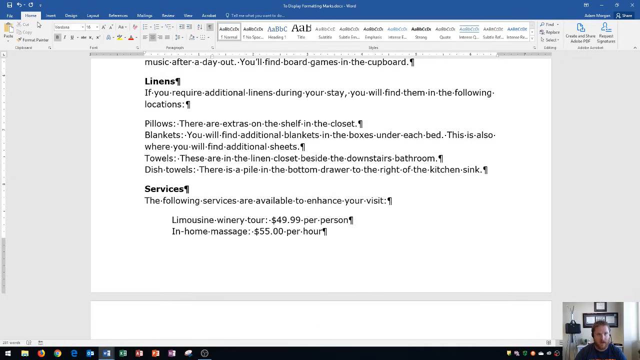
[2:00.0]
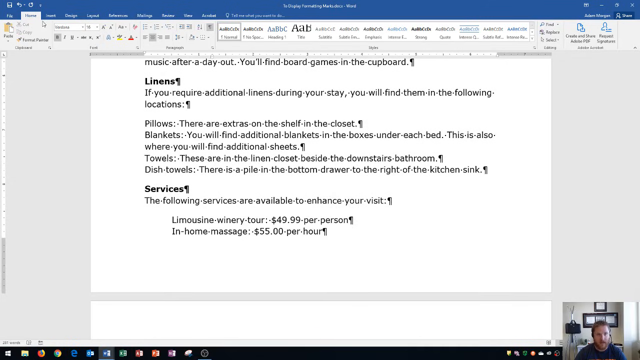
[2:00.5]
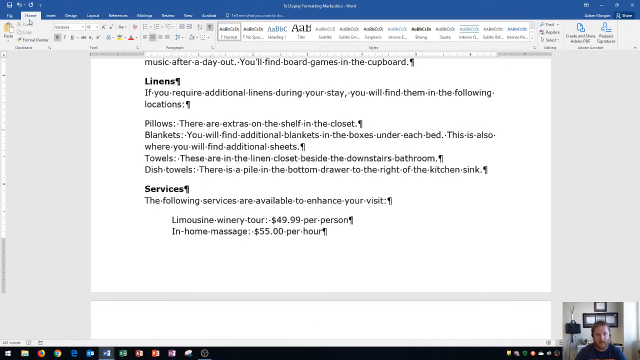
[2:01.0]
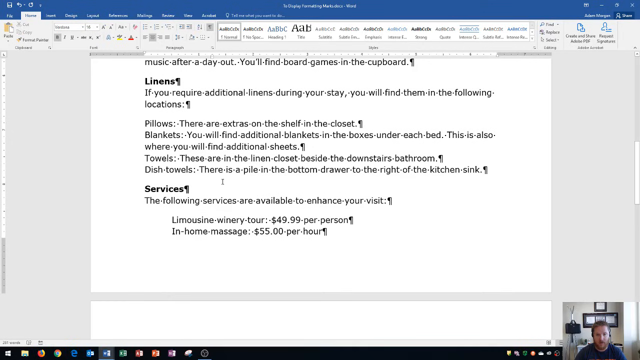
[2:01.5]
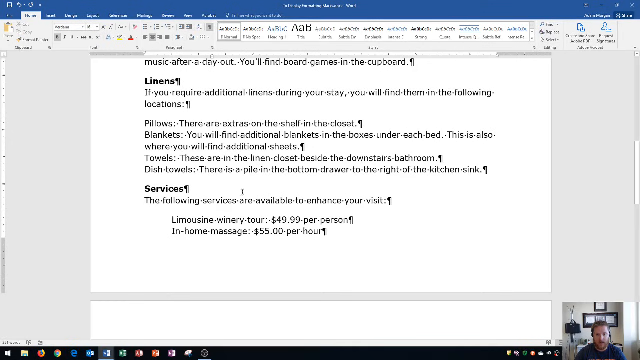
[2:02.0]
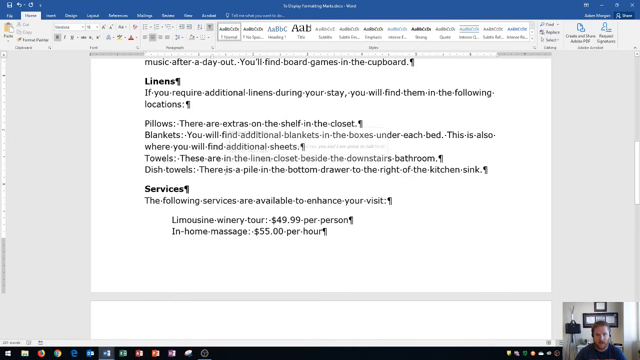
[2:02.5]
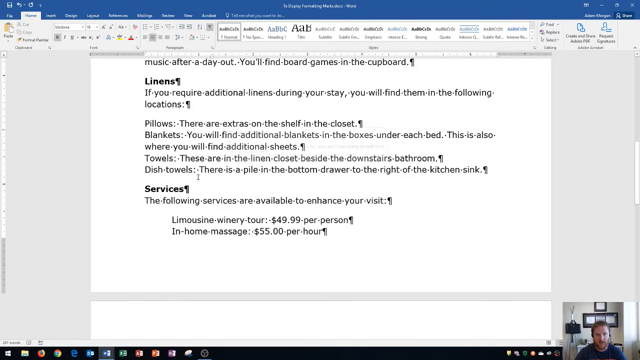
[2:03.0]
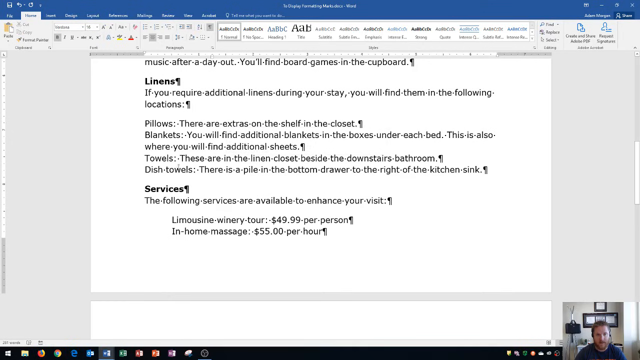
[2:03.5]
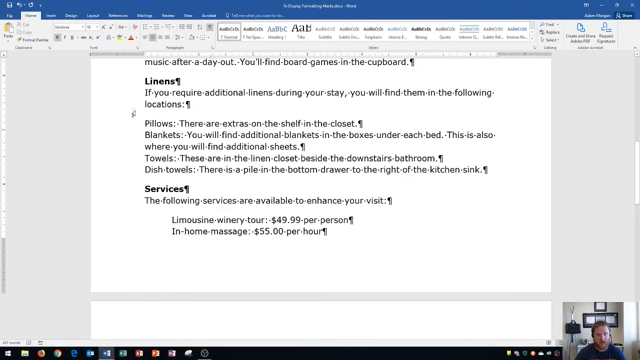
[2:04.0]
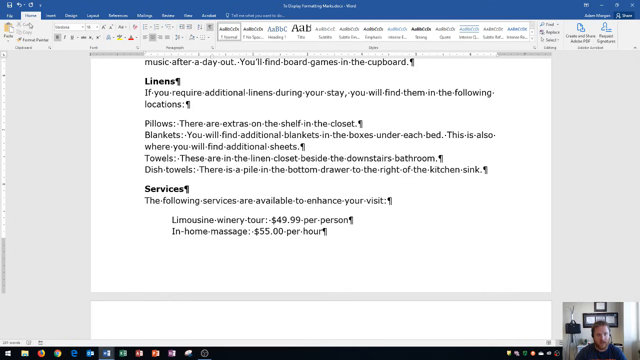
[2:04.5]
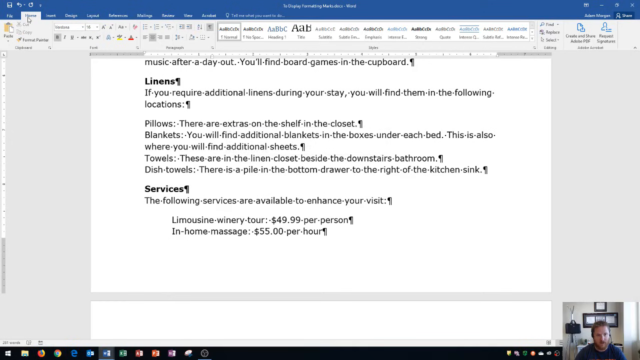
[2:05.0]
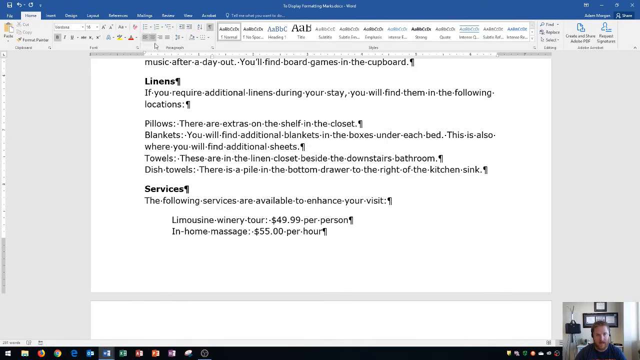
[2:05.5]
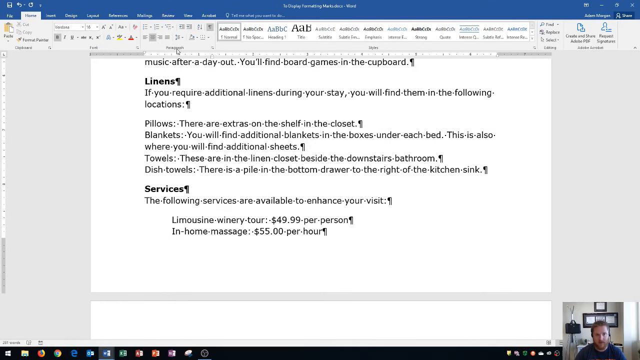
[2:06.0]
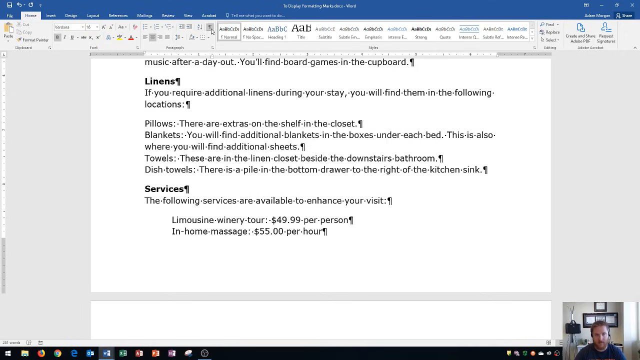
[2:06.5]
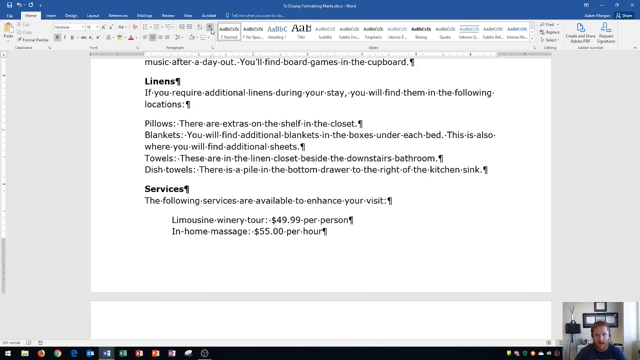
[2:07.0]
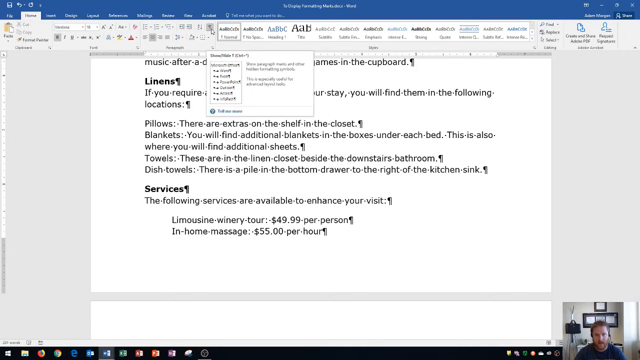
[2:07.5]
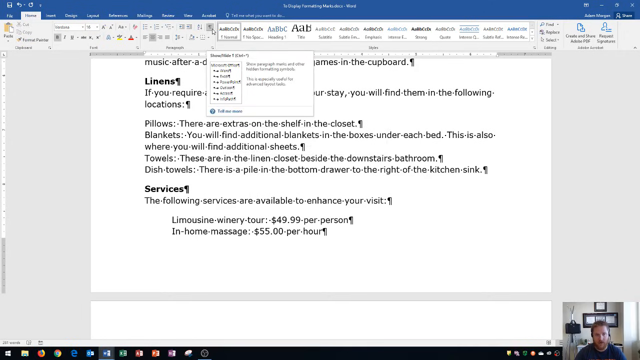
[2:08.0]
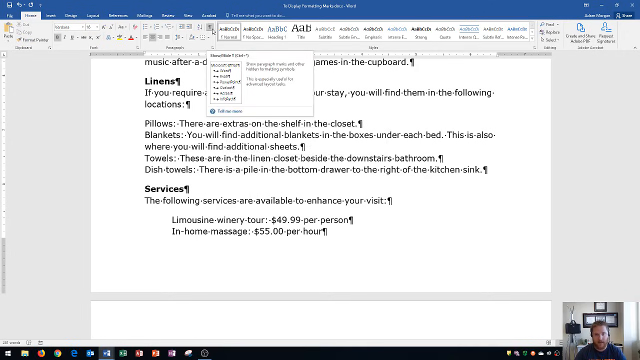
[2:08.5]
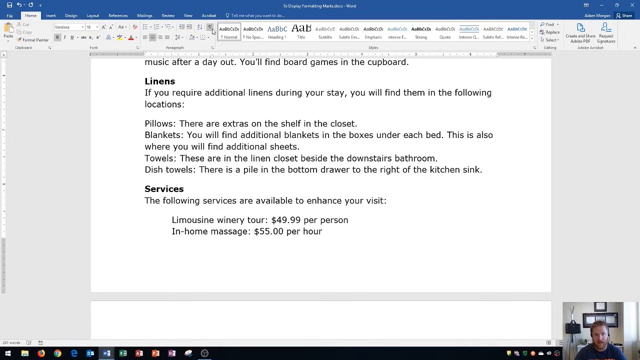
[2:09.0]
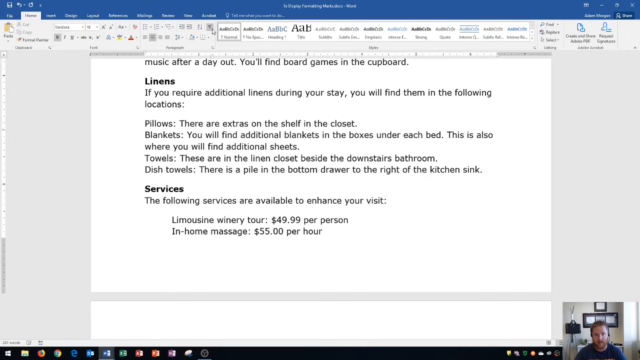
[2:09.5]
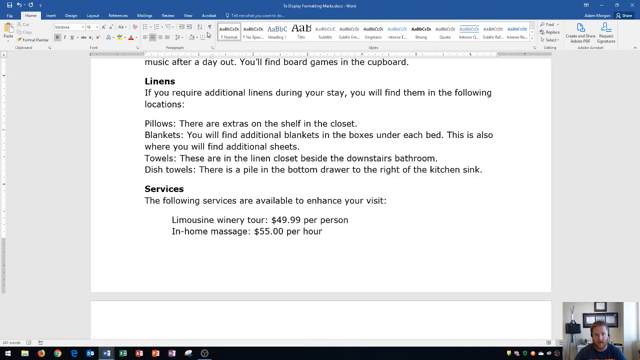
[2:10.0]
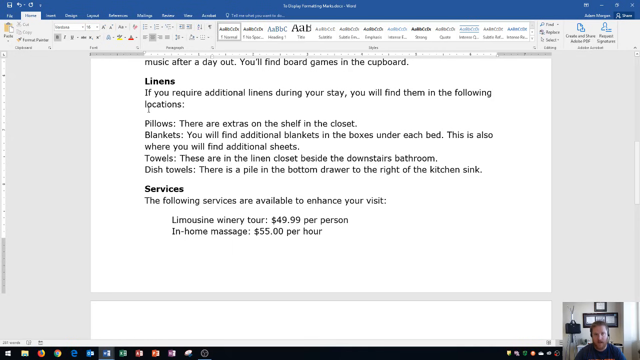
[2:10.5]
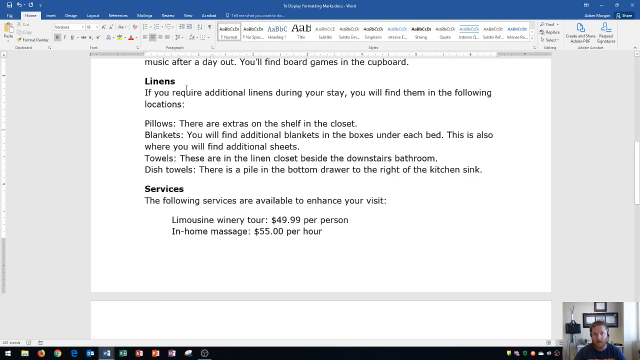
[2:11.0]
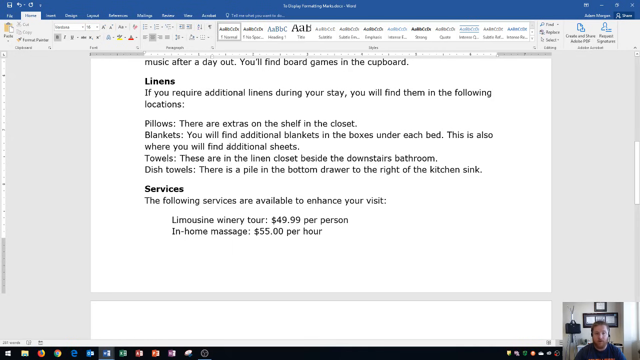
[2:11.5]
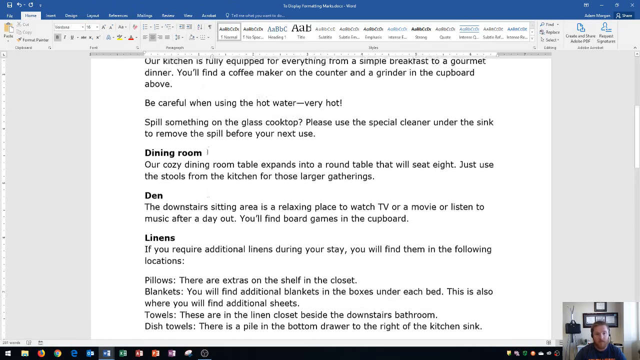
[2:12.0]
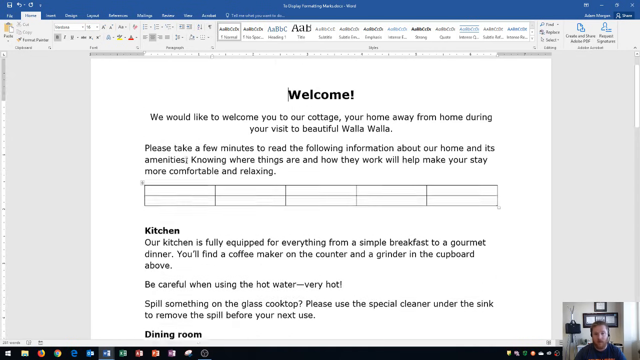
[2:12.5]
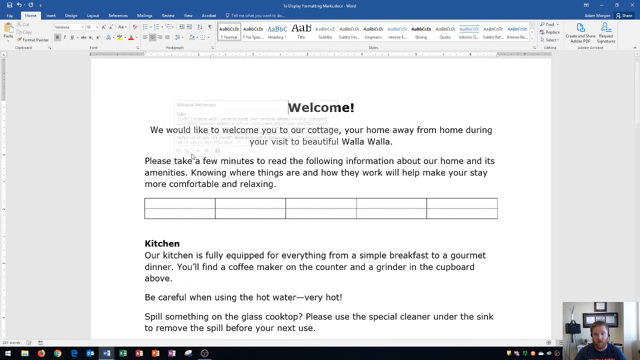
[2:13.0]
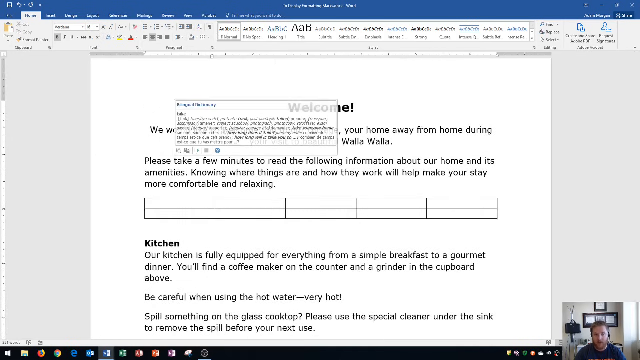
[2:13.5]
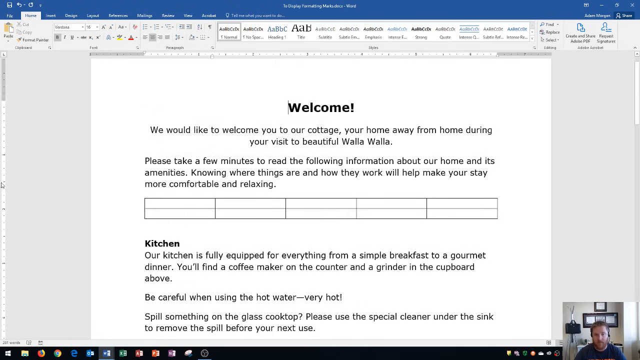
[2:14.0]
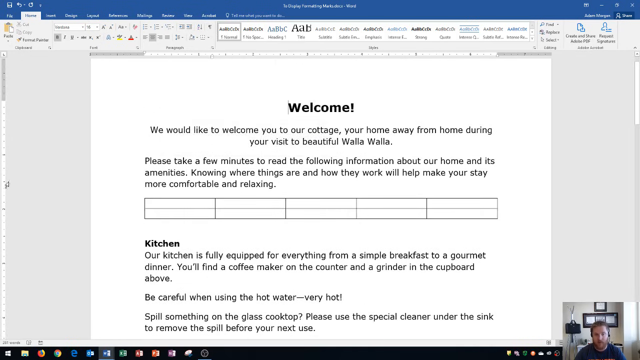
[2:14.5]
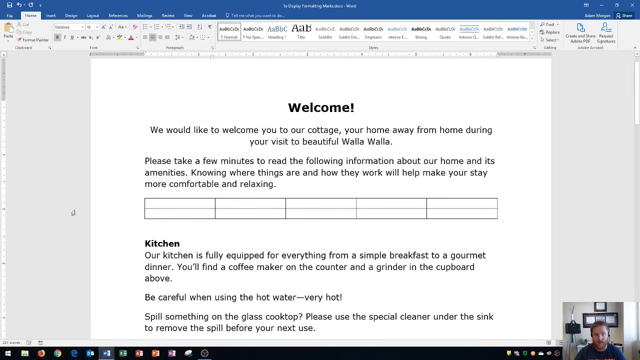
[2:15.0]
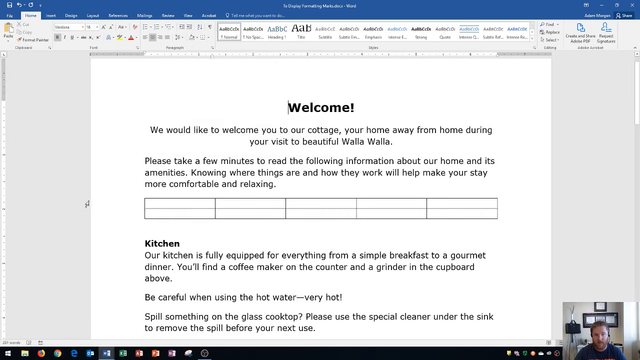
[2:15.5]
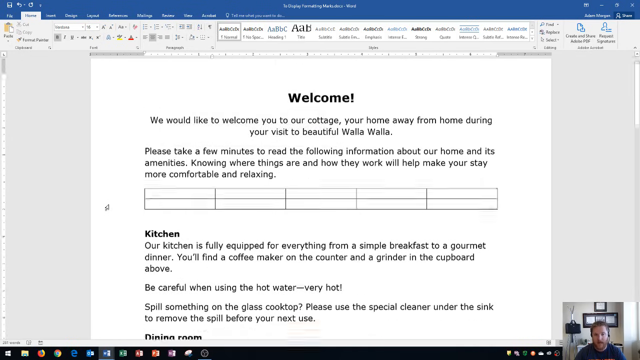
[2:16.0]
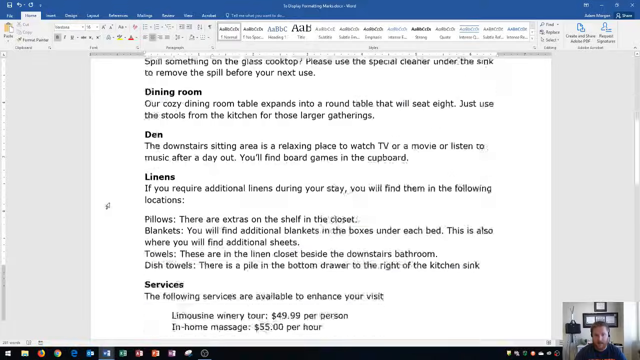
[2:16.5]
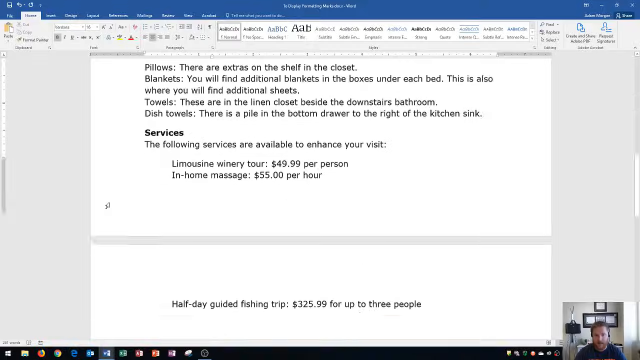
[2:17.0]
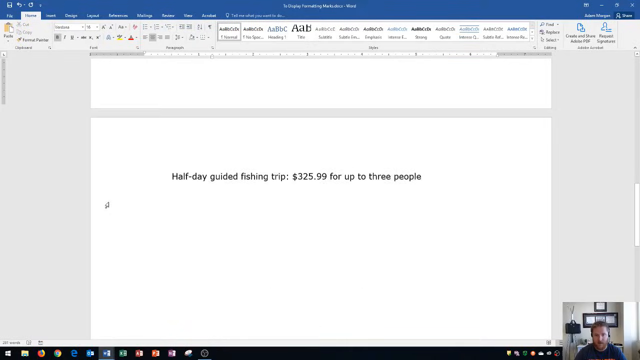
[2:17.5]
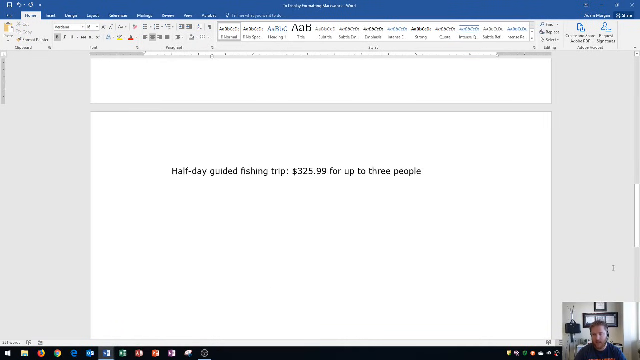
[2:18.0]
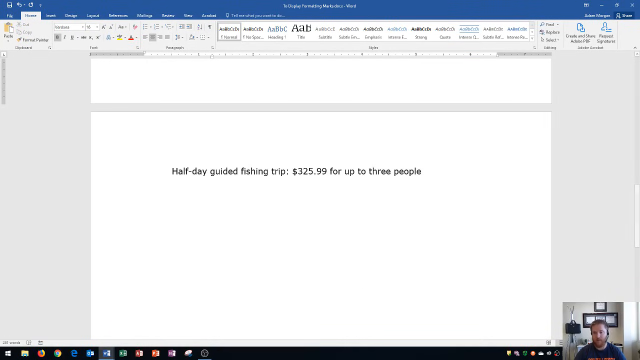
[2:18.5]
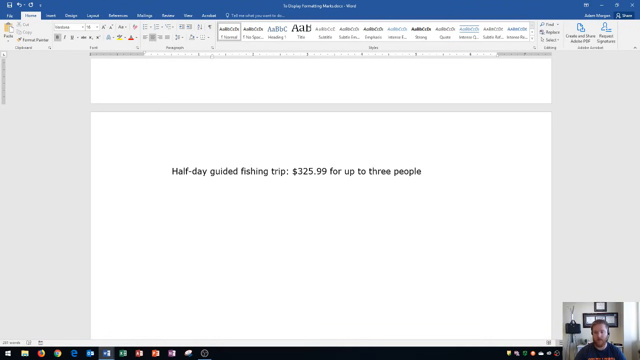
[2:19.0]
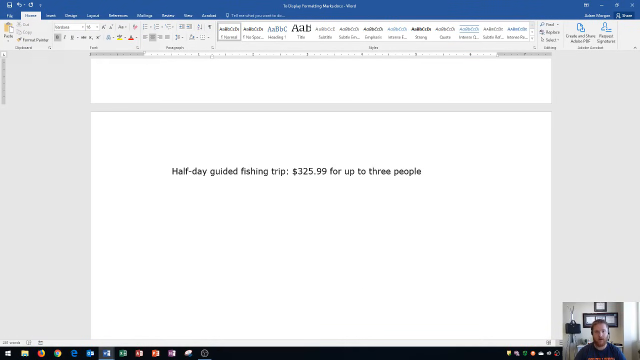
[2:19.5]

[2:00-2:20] The view goes down to below linens and back up to where it says "home", and an icon toward the middle at the top is clicked; the small dots between the words disappear. The page is scrolled up to the top of the first page, then back down to a new page that says "Half-Day Guided Fishing Trip $325.99 for up to three people." The rest of that page looks blank. The linens section says "if you require additional linens during your stay, you will find them in the following locations. Pillows, there are extras on the shelf in the closet. Blankets, you will find additional blankets in the boxes under each bed. This is also where you find additional sheets. Towels, these are in the linen closet beside the downstairs bathroom. Dish towels, there is a pile in the bottom drawer to the right of the kitchen sink." Under the services heading it says "the following services are available to enhance your visit. Limousine winery tours, $49.99 per person. In-home massage, $55 per hour." The man sits mostly motionless as he speaks to the camera, at one point moving his head slightly back and at another cocking his head slightly to the side.